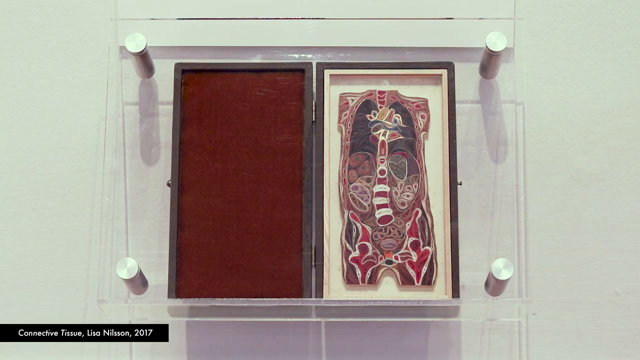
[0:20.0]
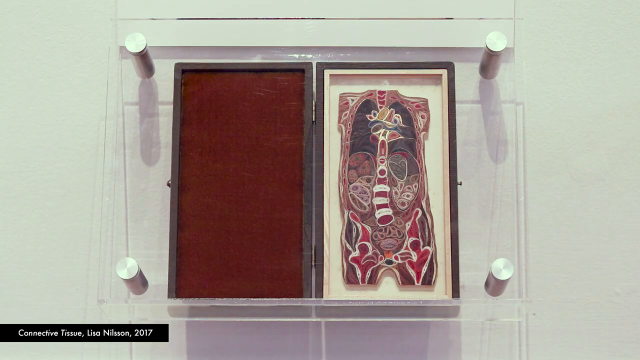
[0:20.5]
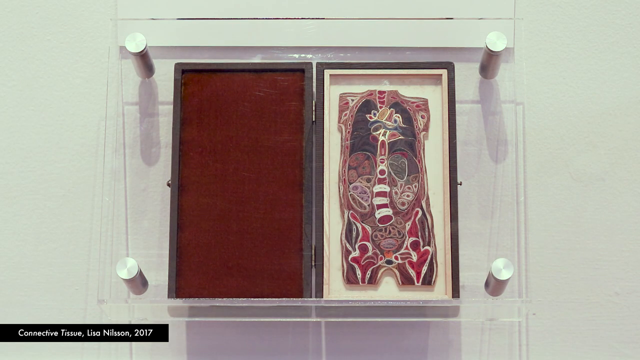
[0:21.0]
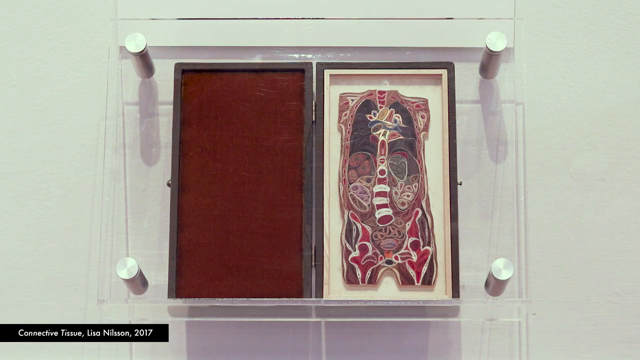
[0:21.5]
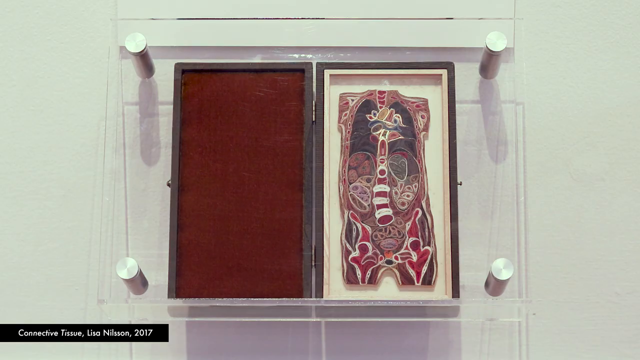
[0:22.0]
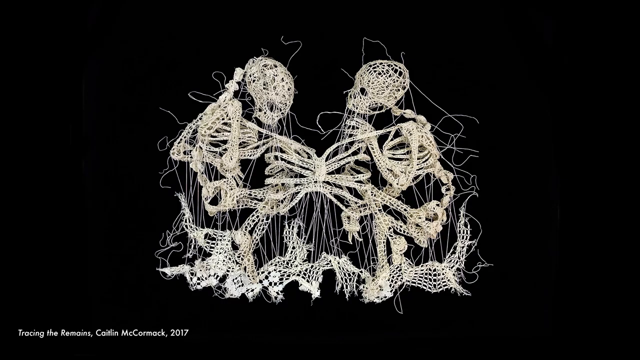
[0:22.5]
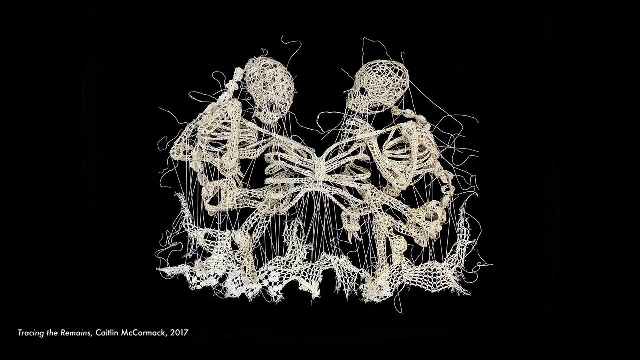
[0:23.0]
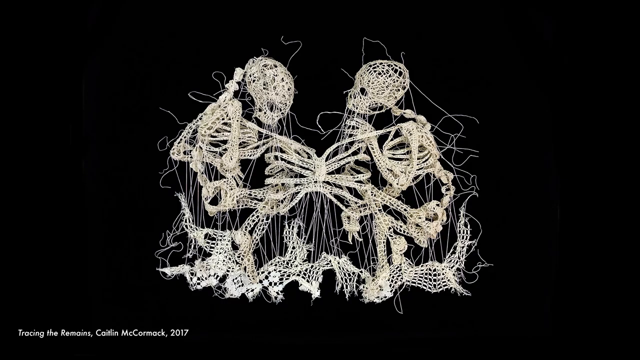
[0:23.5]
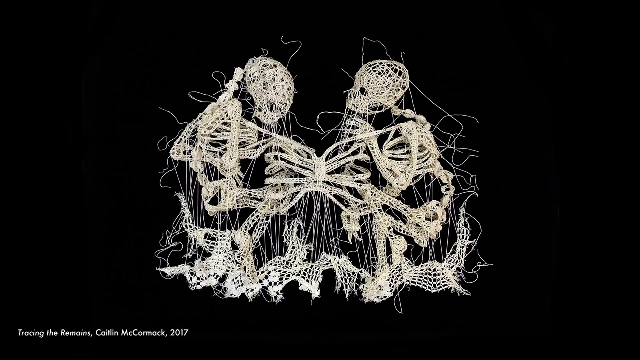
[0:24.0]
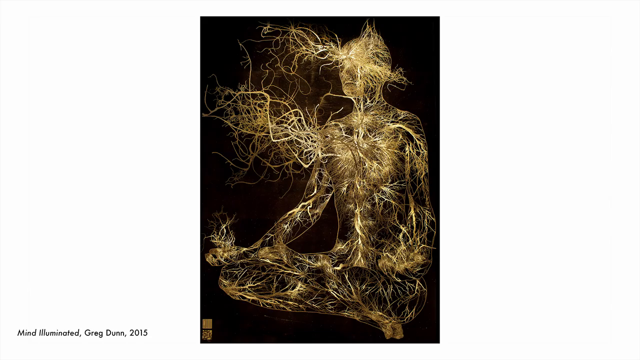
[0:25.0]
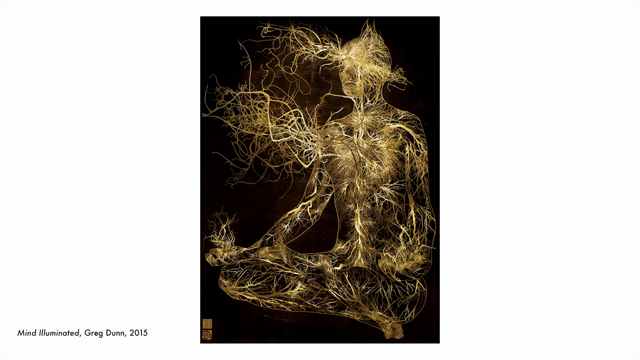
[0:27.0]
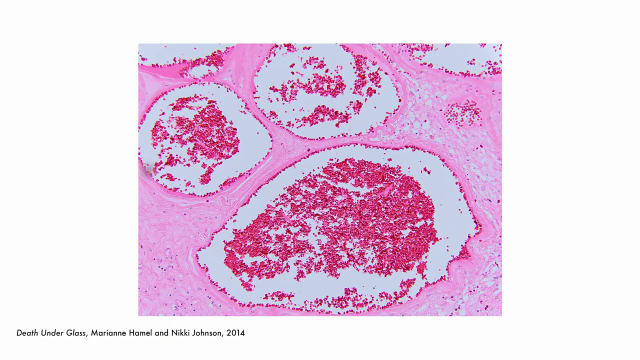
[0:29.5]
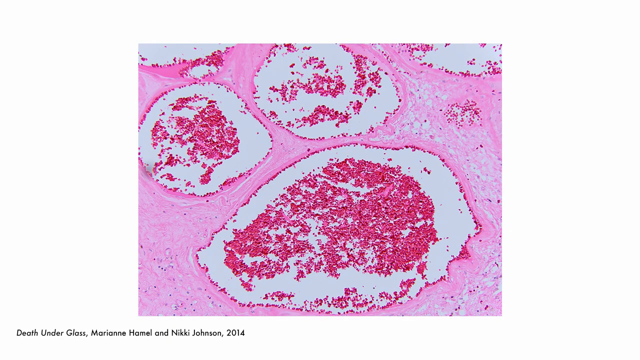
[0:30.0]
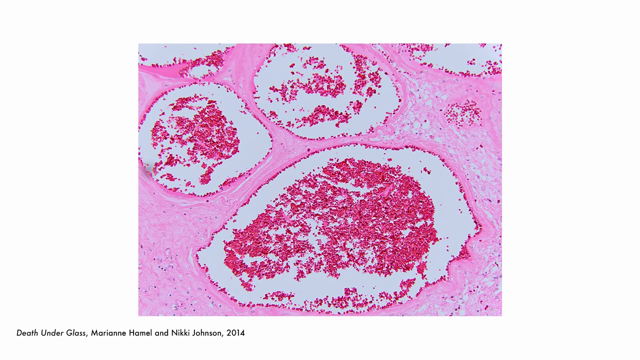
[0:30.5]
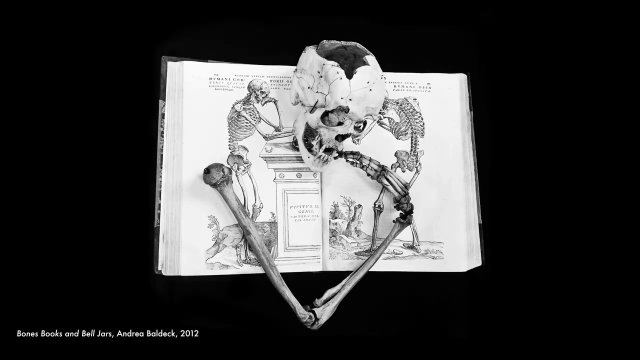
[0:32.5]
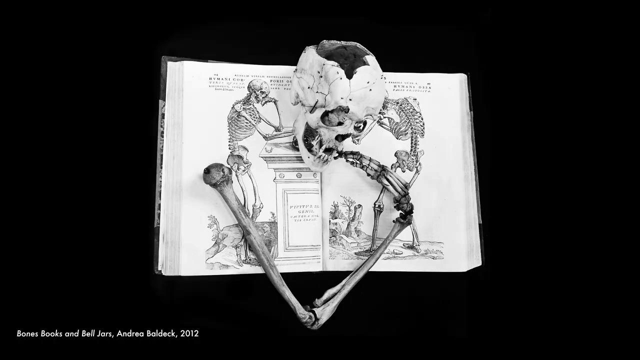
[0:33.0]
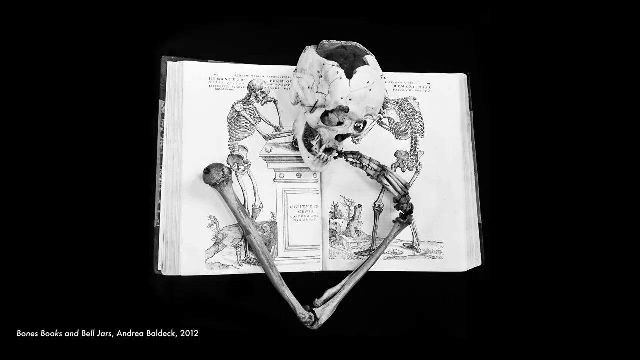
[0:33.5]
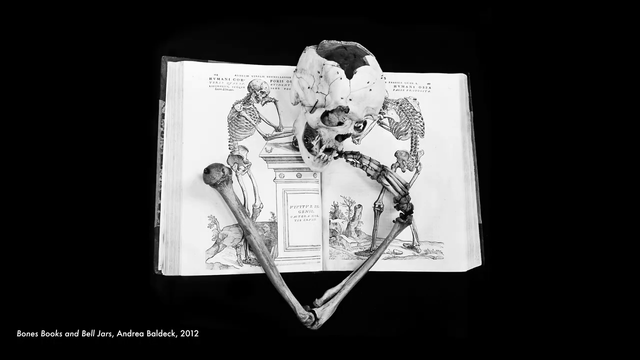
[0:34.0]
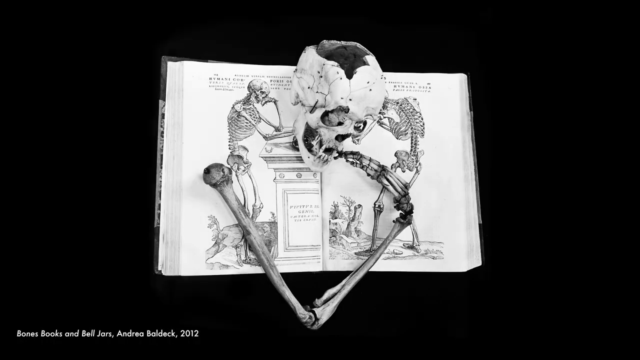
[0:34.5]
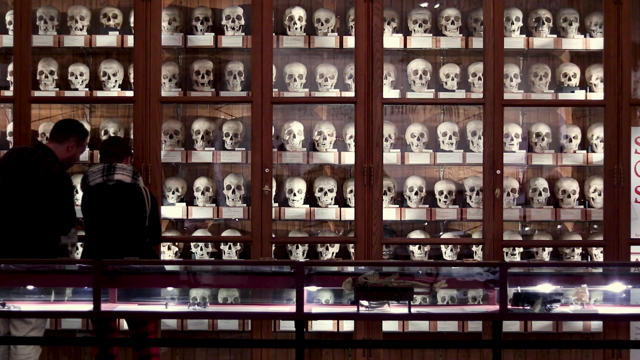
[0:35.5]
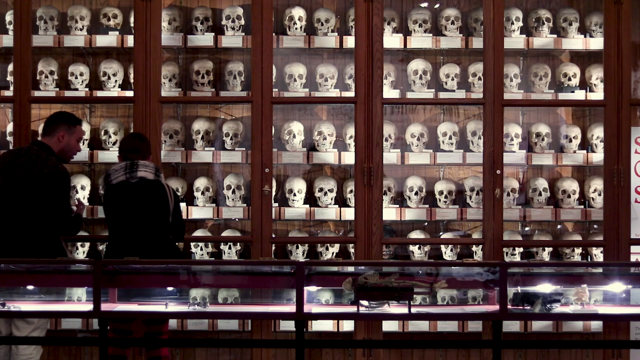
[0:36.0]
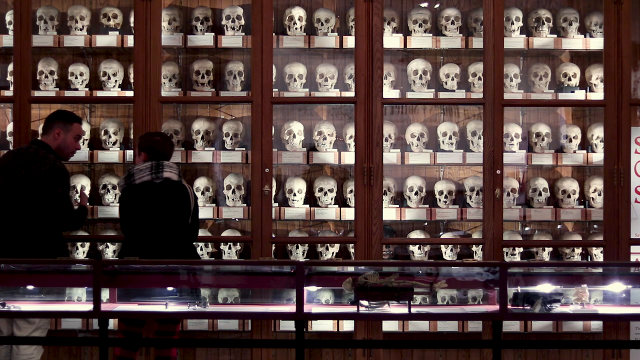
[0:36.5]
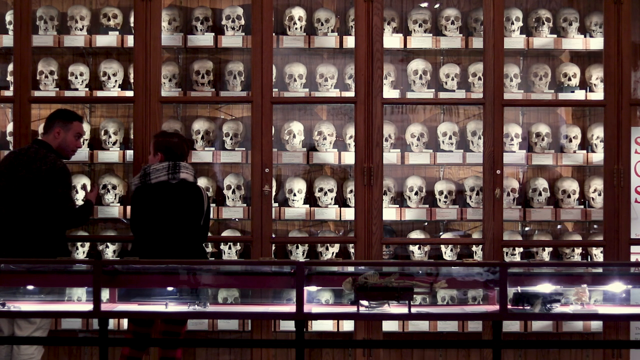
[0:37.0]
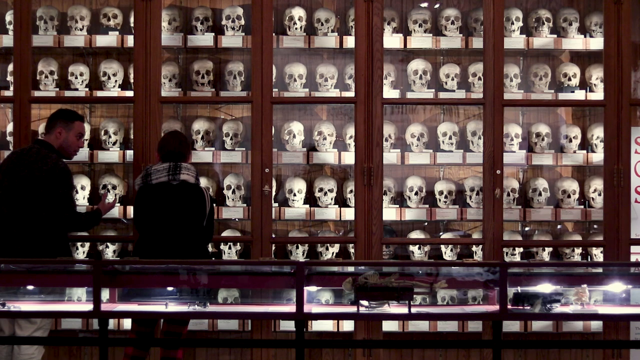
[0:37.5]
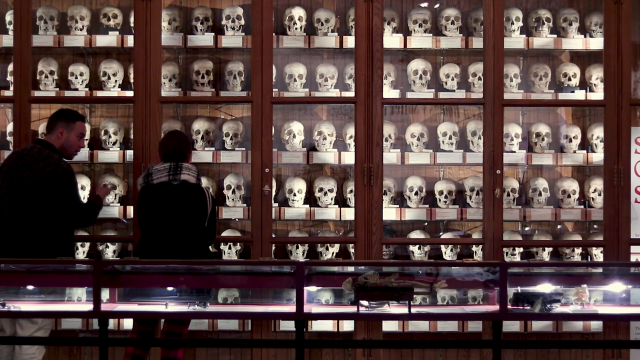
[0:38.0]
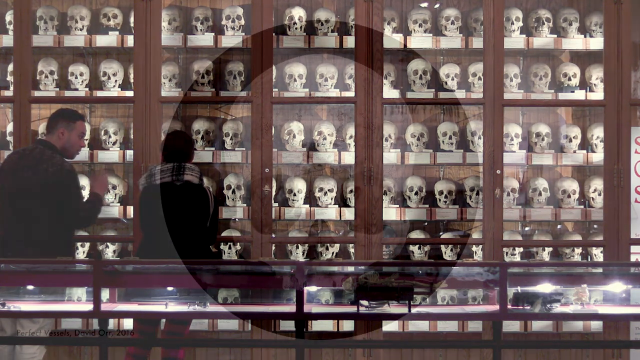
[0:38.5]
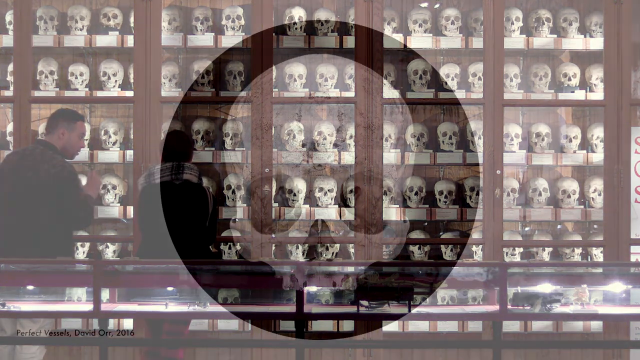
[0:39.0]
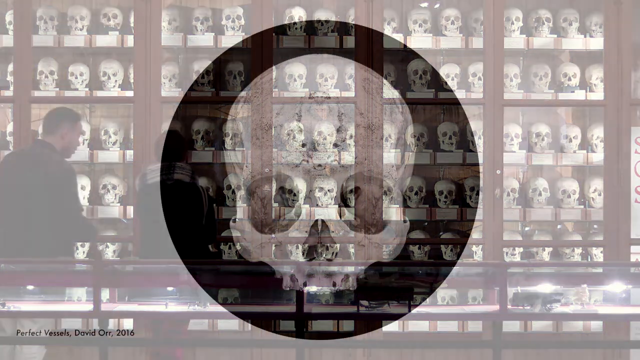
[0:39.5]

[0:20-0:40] An image in a museum case shows, on the left-hand side, something brown that looks almost like an ink pad, and on the right-hand side a depiction of the inside of the human body done in quite an artistic way. Four silver pegs are around the outside, one at each corner. Next come skeletons made from what look like lots of strings, and a human body in a meditation pose made from lots of strings. Then pink shapes with dots in them appear, followed by a book with a skull and an arm bone coming out of it. Then a cabinet full of rows of skulls is shown, followed by a single skull in a black circle. The images flick quite quickly from one to another, and small text at the bottom left explains what the artworks are, including a year. In the shot of the skulls in the cabinet, a man and a woman look at them at the bottom left; the woman wears a scarf. The skulls rest on boxes within the cabinet, and six rows of skulls are visible.